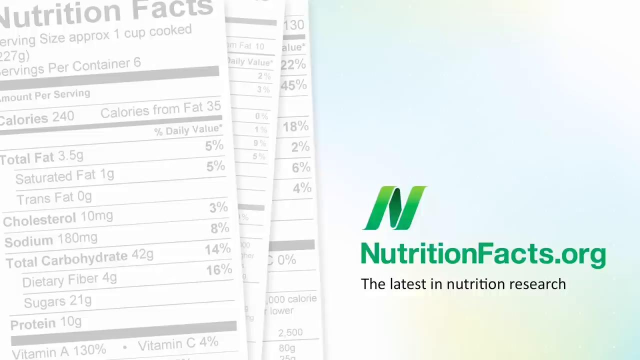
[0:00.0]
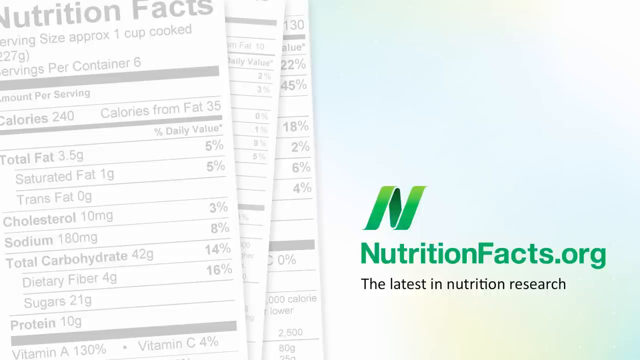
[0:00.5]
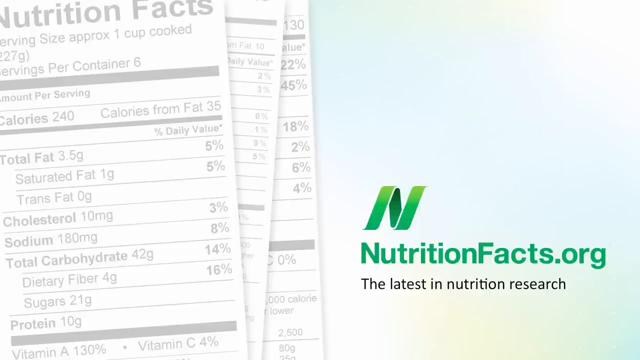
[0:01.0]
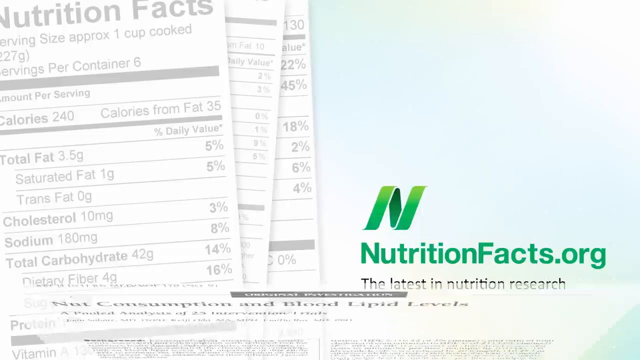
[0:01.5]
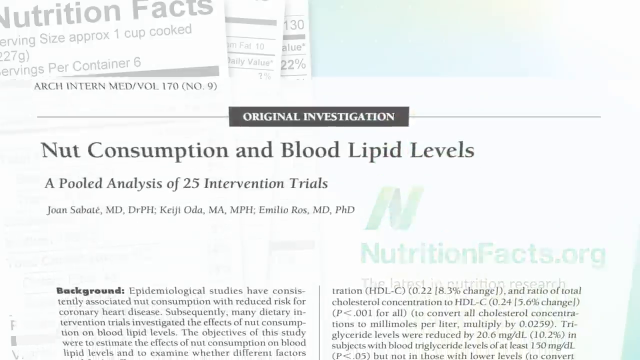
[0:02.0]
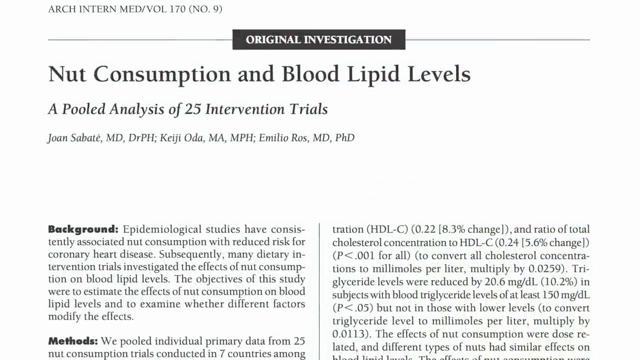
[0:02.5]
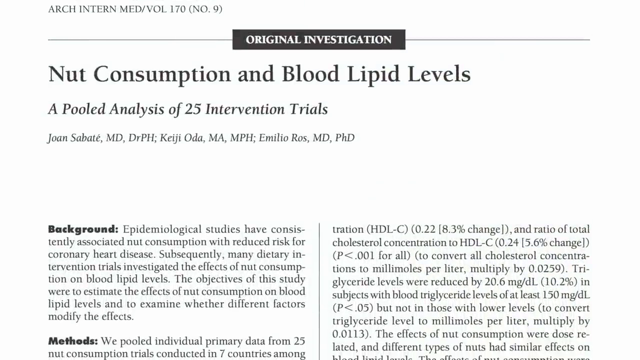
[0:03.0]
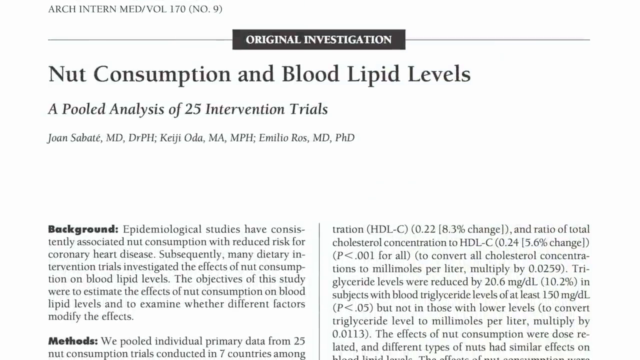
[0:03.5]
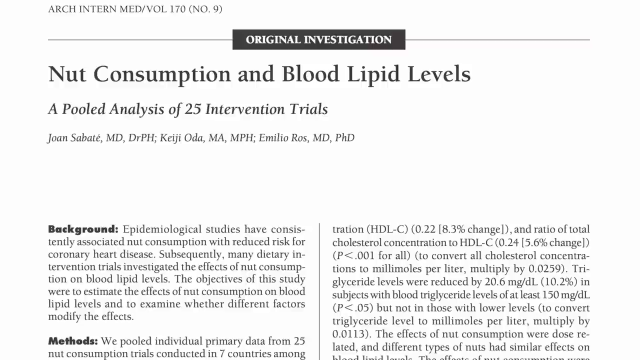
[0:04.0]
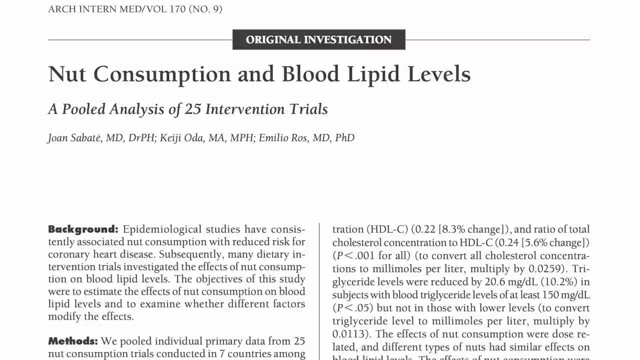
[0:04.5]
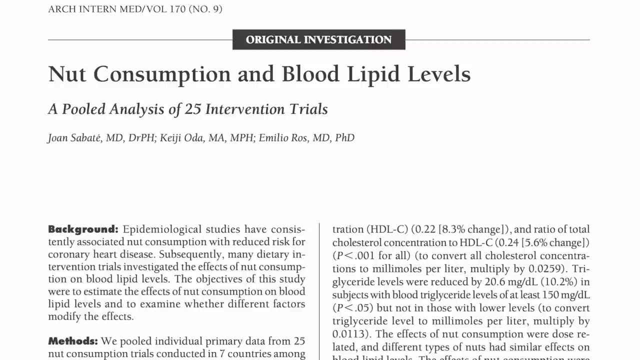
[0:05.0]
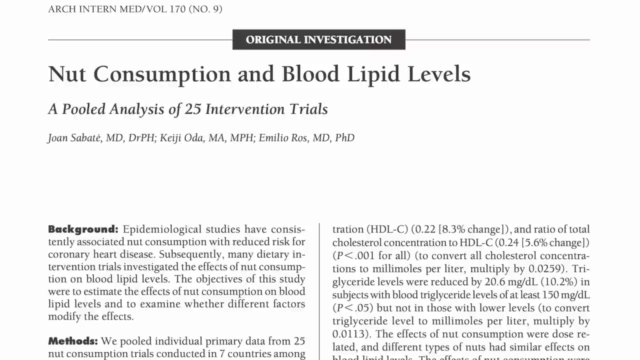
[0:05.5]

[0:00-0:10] The video opens with nutritional facts on the left-hand side and a symbol of an N on the right-hand side, with "nutritionfacts.org, the latest in nutrition research" underneath it. The video then flips up to a new page with a banner at the top reading "original investigation." Beneath it is the title "nut consumption and blood lipid levels. A pooled analysis of 25 intervention trials," followed by the article's authors. The article is laid out in two sides. It begins with "background" in bold black letters, followed by more information about the article, and then a paragraph headed "methods" in dark black bold letters with further information below it.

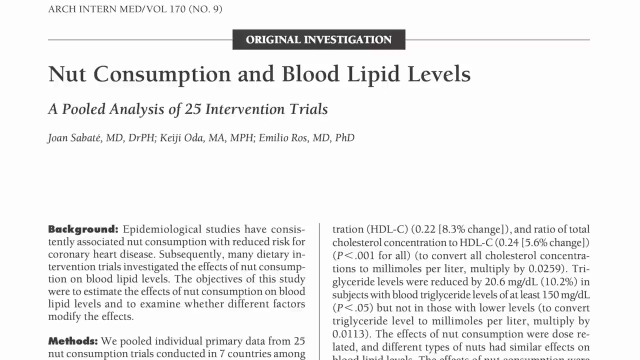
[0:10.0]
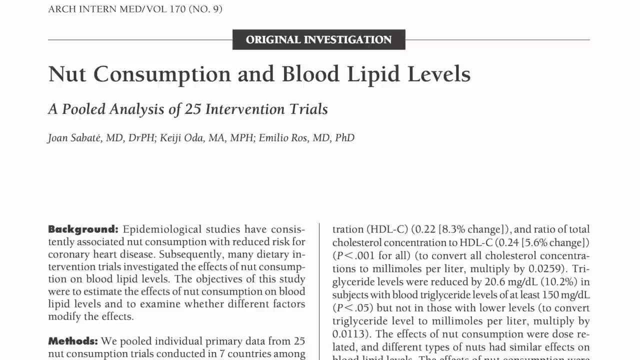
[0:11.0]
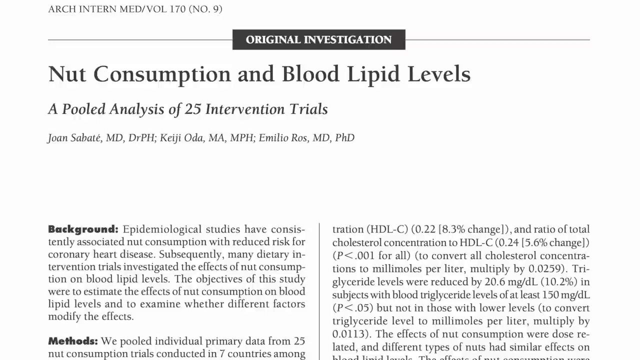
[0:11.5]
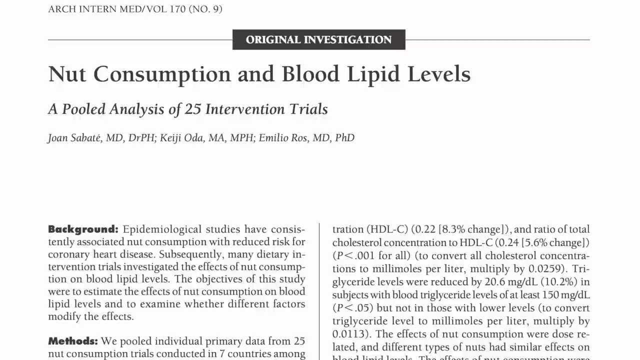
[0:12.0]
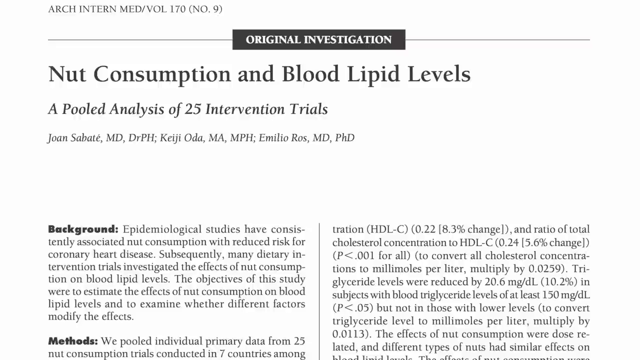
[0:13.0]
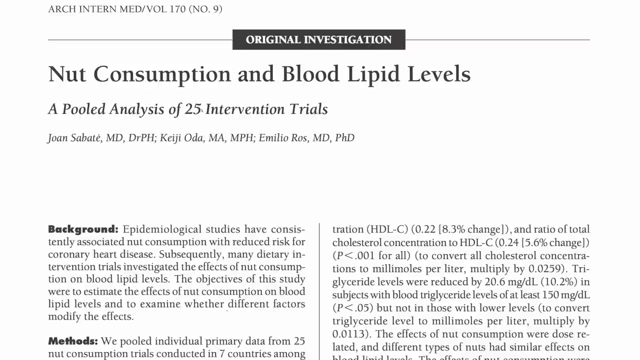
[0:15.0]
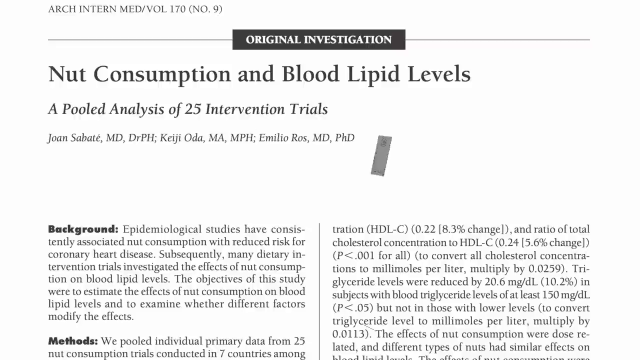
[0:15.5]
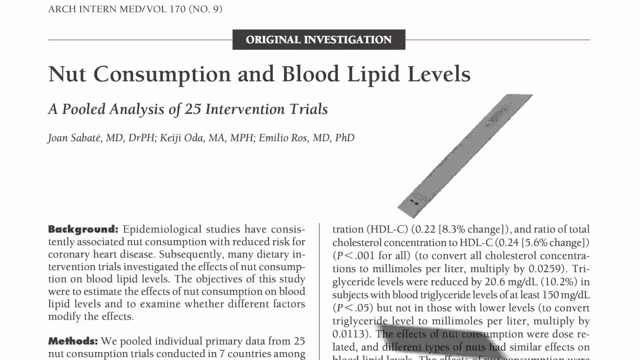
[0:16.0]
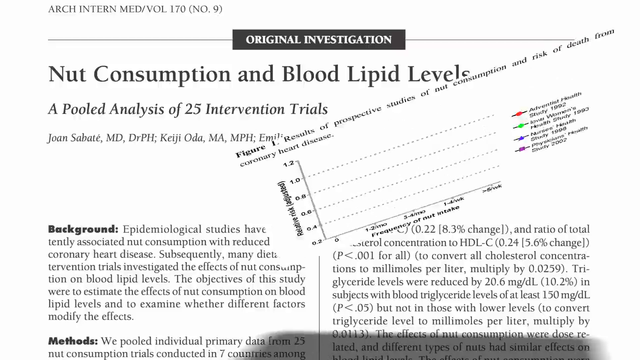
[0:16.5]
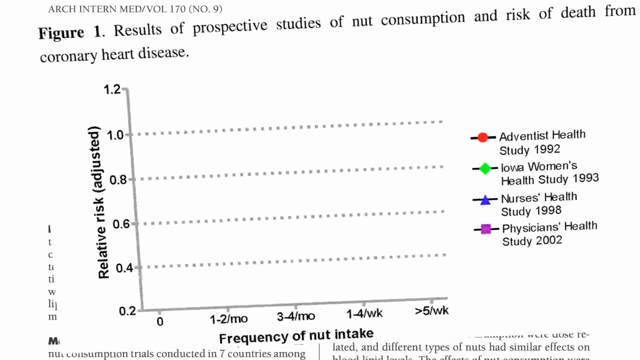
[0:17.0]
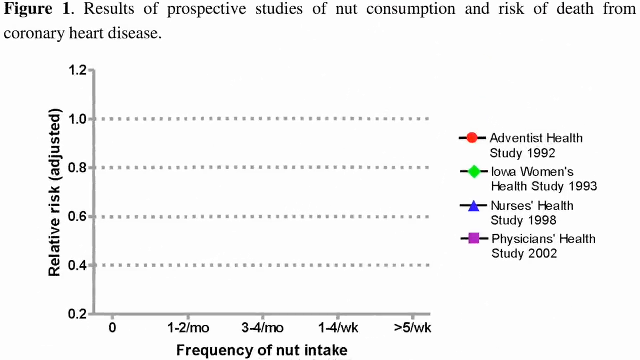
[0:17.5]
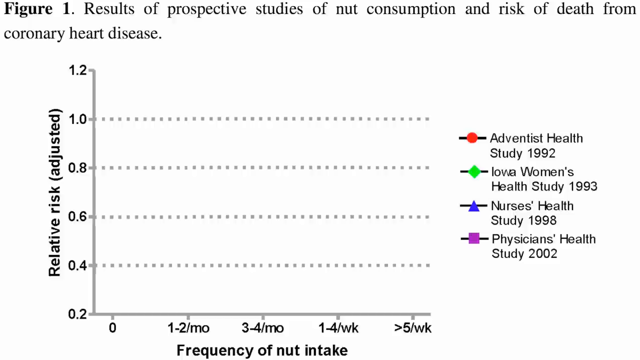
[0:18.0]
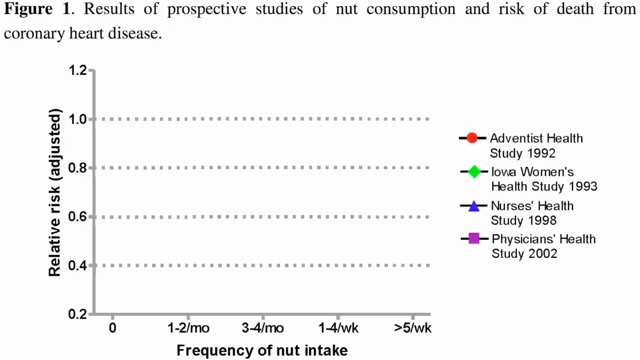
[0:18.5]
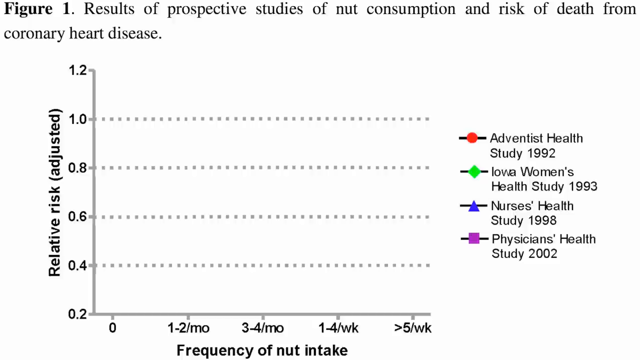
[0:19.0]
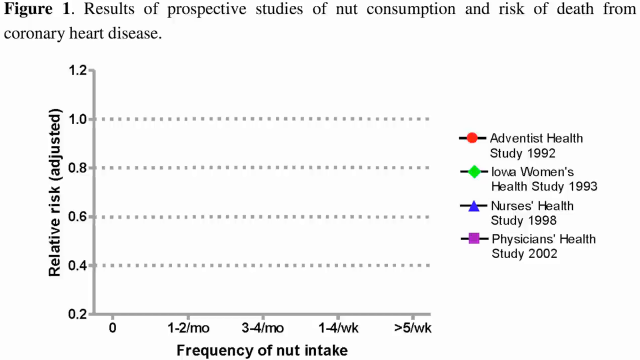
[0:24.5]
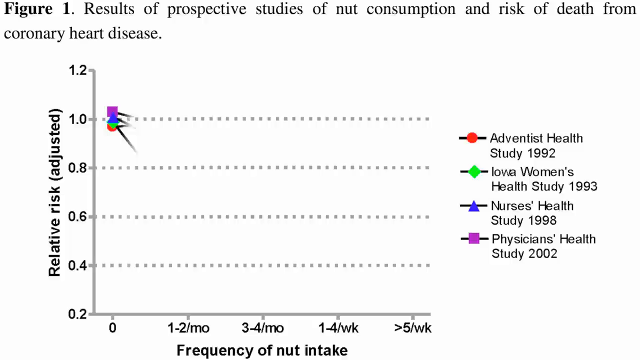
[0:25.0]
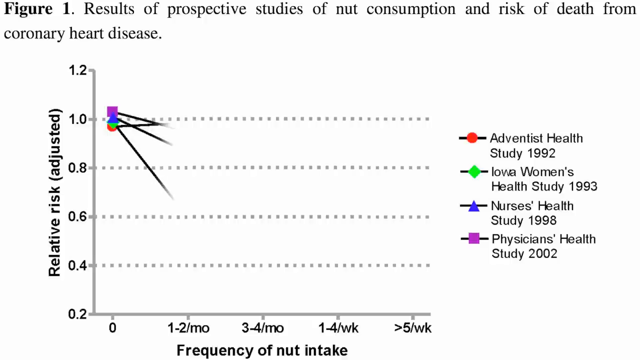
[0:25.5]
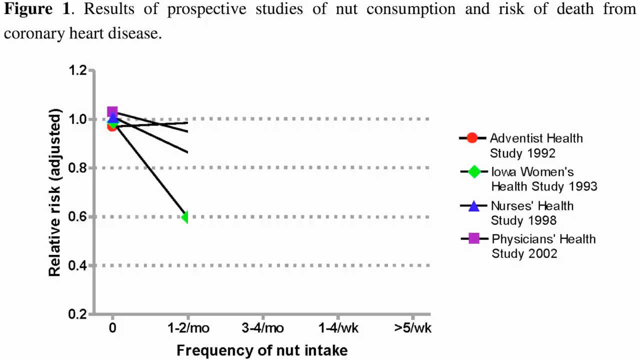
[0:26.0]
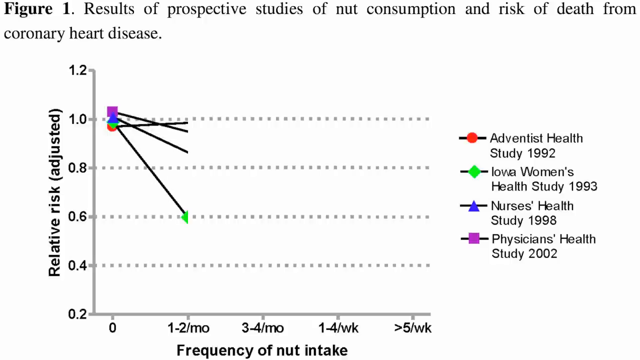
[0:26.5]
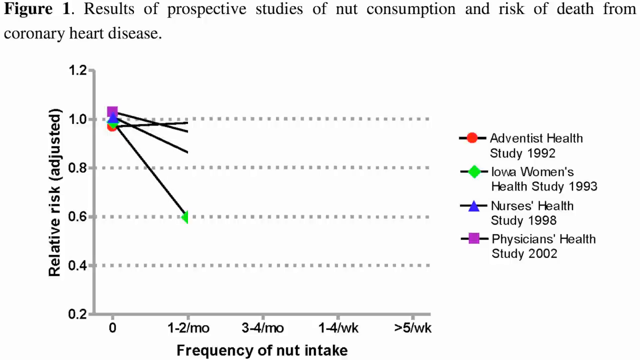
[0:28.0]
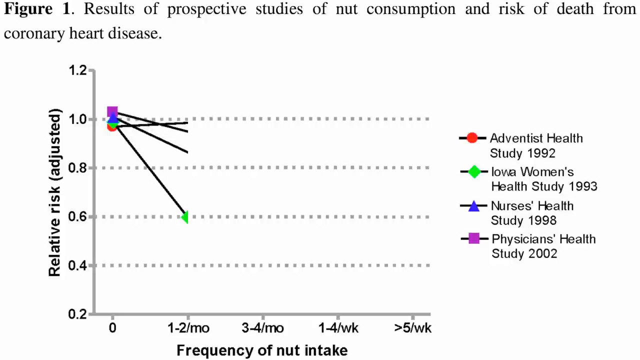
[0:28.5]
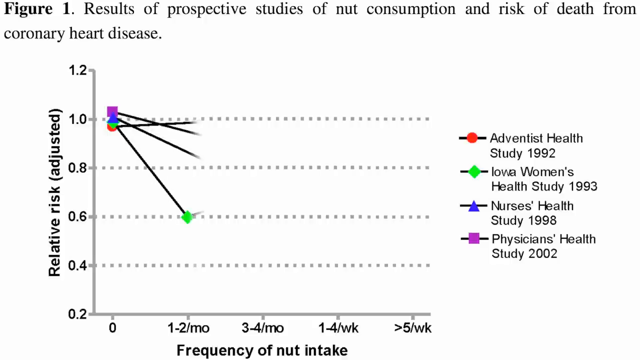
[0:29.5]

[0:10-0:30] The article page stays on screen for about five seconds, then the view changes to a close-up of figure 1, titled "results of prospective studies of nut consumption and risk of death from coronary heart disease." Beneath the title is a graph. The left-hand axis reads "relative risk (adjusted)" and runs from 0.2 at the bottom up through 0.4, 0.6, 0.8, 1.0 and 1.2. The bottom axis, labeled "frequency of nut intake," goes from zero to five weeks. On the right-hand side are four points for the graph: "Adventist Health Study 1992," "Iowa Women's Health Study 1993," "Nurses Health Study 1998" and "Physicians Health Study 2002."